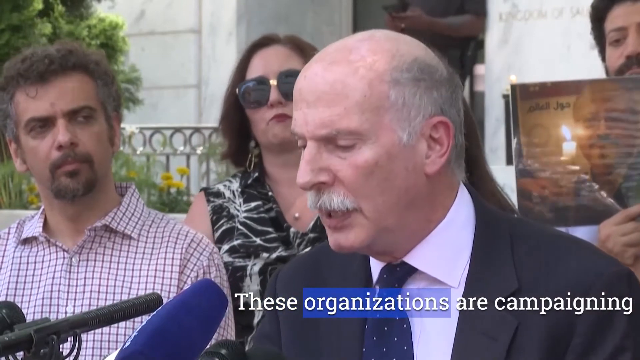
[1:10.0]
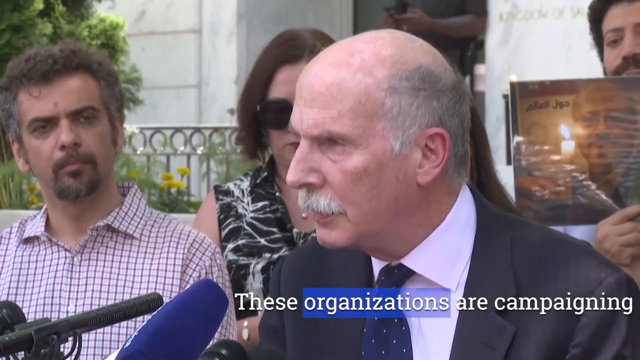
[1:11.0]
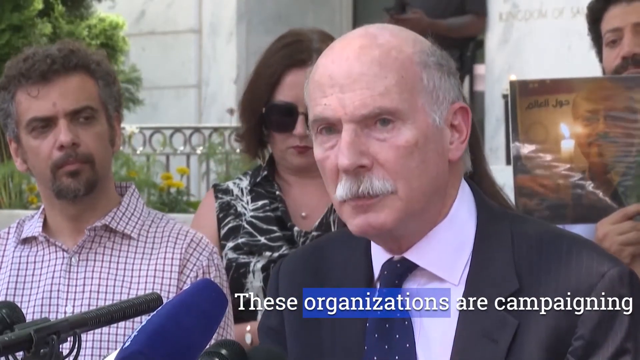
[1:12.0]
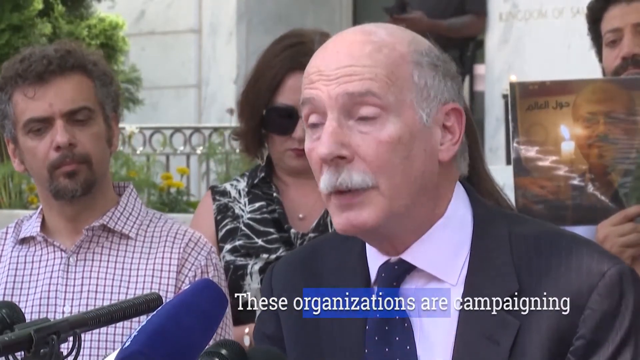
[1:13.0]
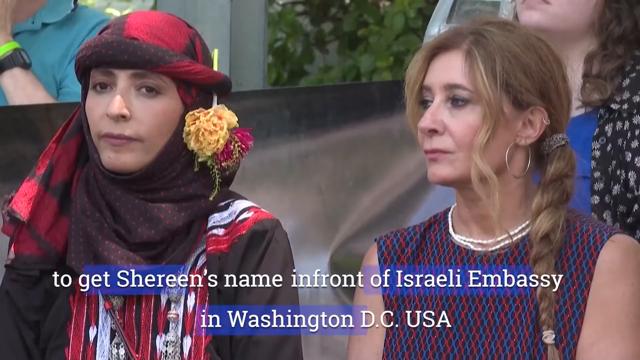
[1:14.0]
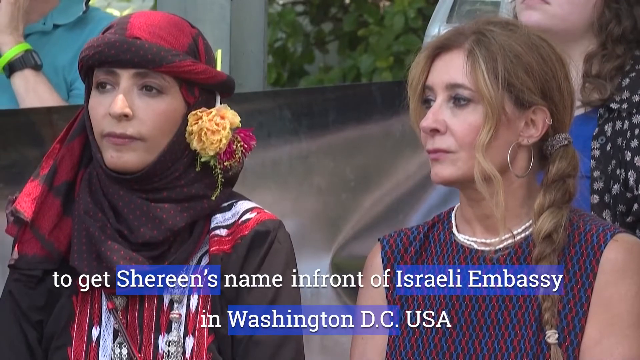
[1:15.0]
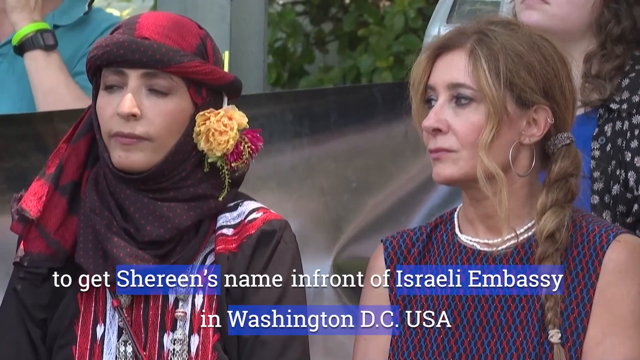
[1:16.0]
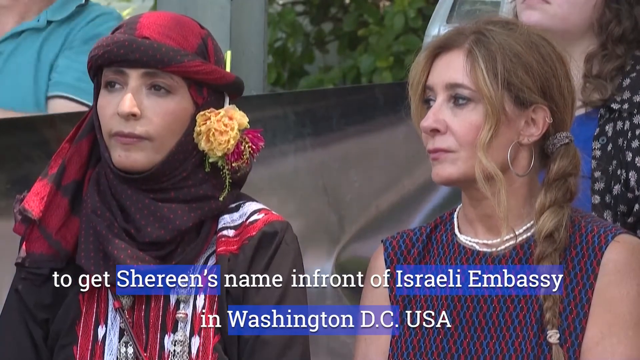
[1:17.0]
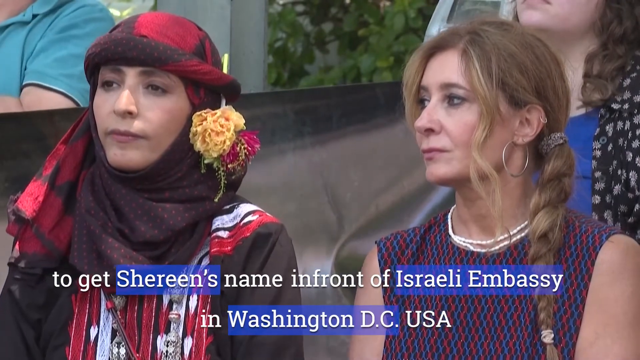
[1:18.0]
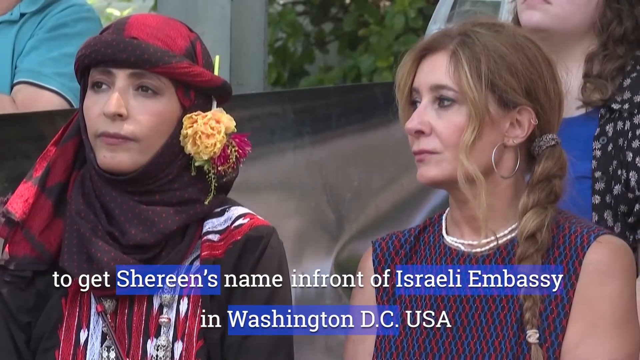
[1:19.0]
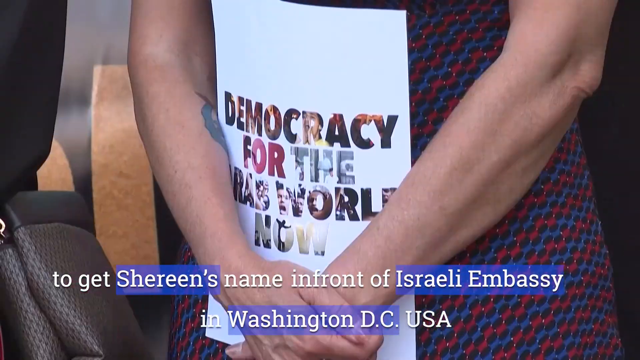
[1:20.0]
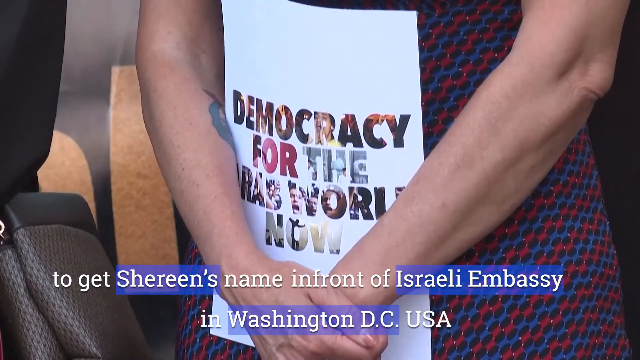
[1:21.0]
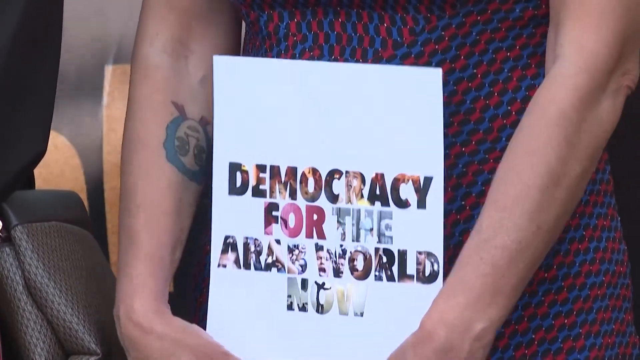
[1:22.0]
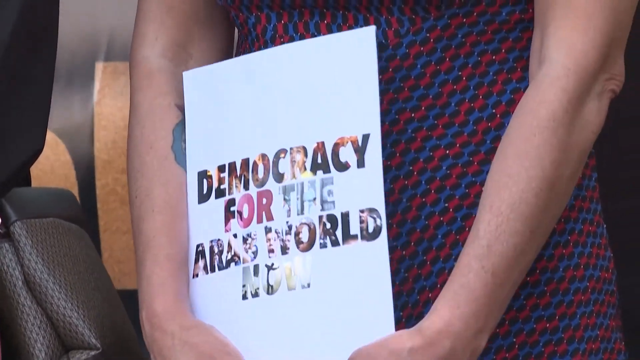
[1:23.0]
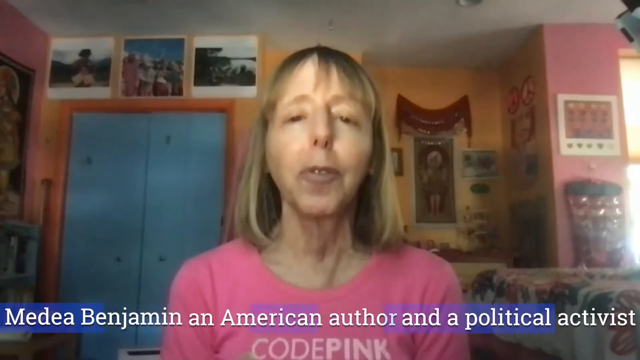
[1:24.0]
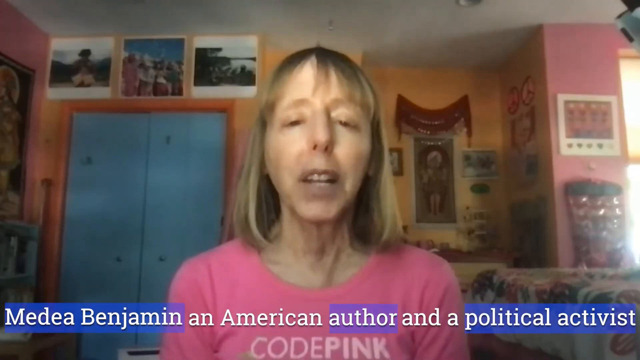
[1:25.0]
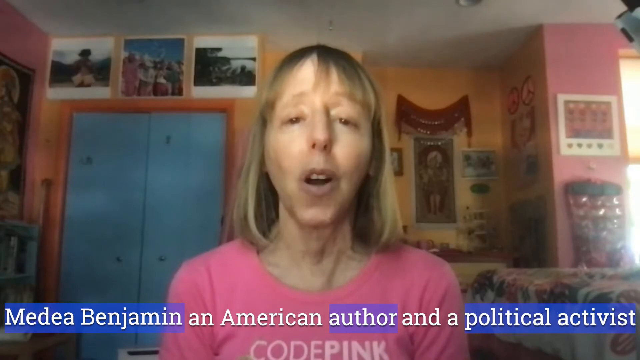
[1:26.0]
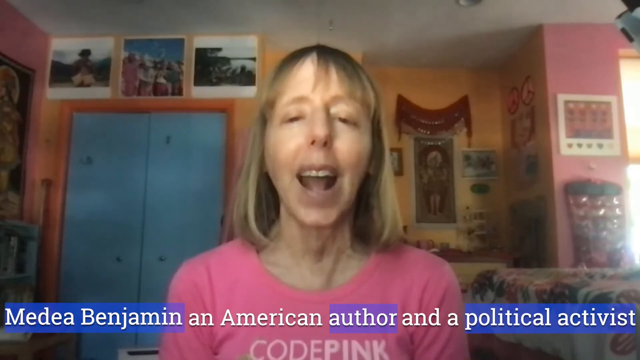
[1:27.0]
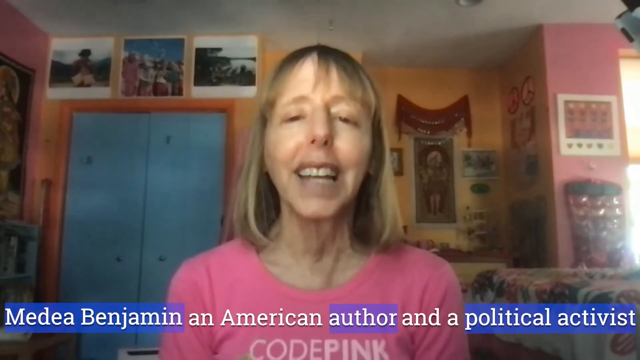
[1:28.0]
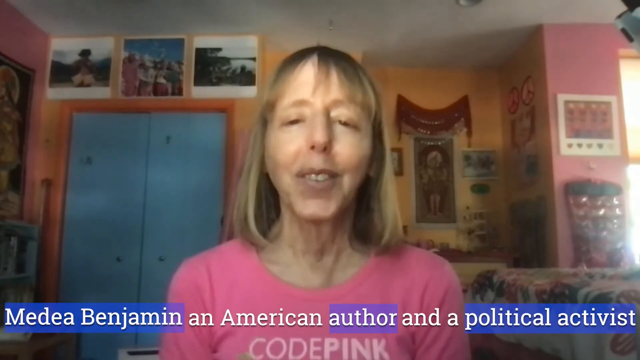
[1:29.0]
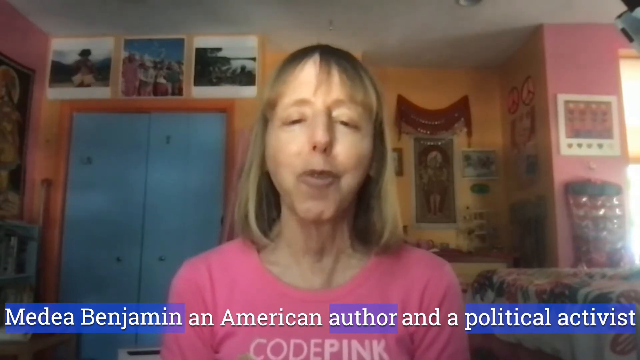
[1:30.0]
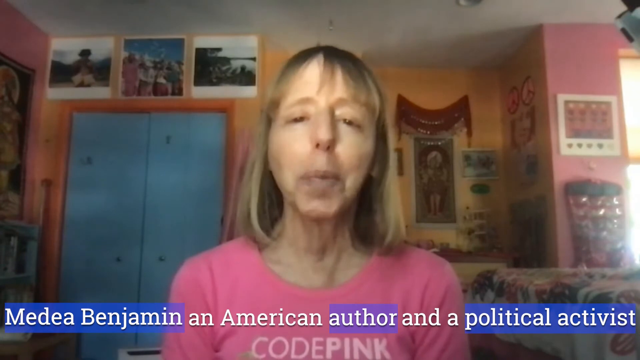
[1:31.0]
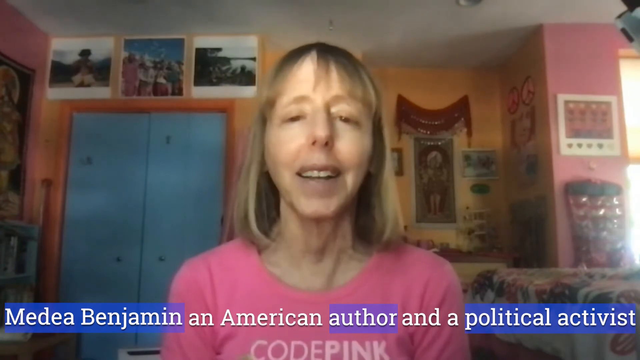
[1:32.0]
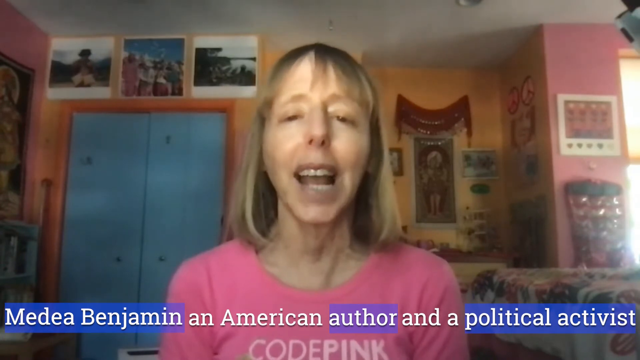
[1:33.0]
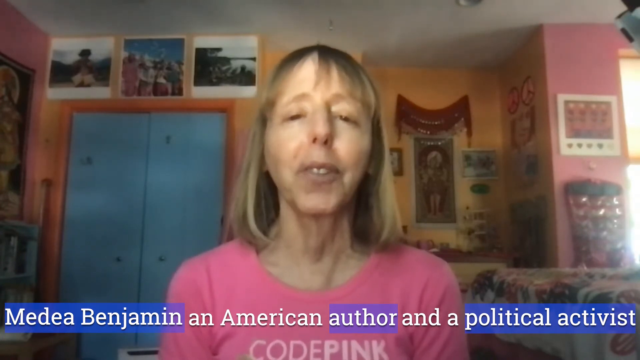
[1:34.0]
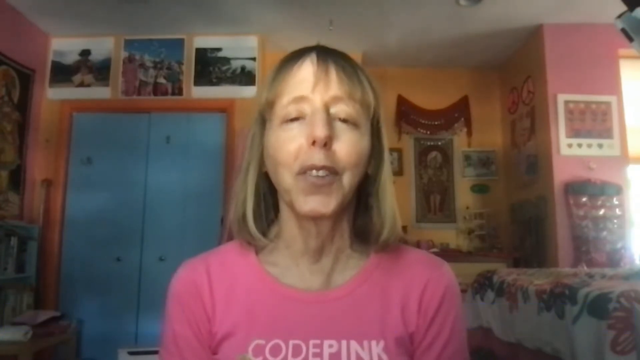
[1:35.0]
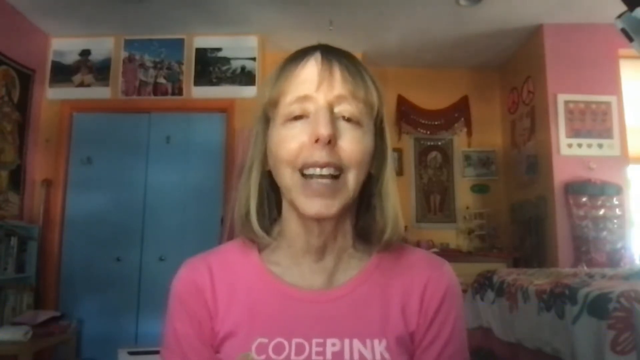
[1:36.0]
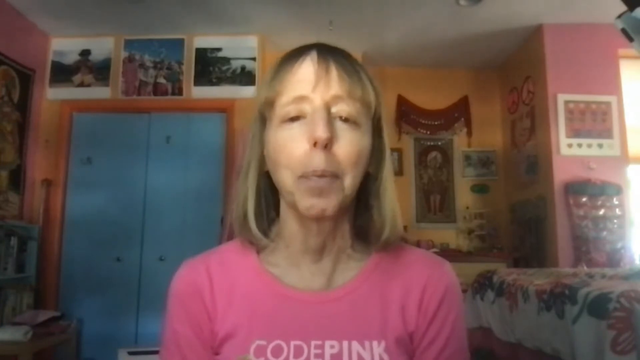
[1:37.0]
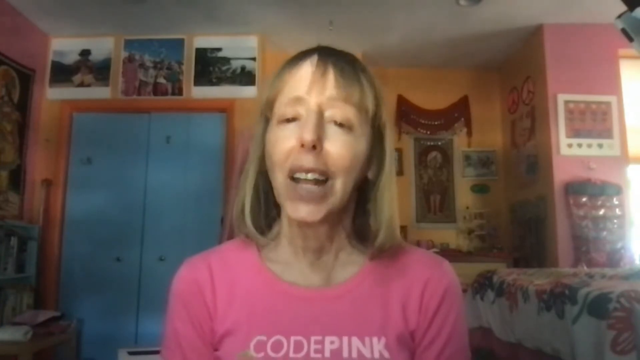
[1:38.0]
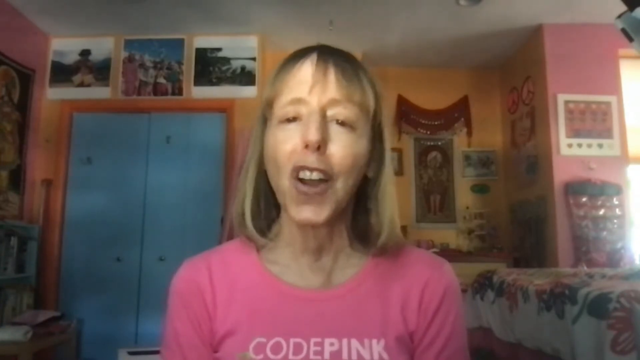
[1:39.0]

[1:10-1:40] A man with a silver mustache, an expensive-looking suit, a navy blue tie with polka dots and a slightly pink shirt stands at a microphone. People behind him hold up signs, one of them the sign of Jamal Khashoggi seen earlier, with the candle overlaid on his face. Text appears explaining that these organizations are campaigning to get Shireen's name in front of the Israeli embassy in Washington, D.C., U.S.A.; Shireen is apparently the woman pictured on the mural. A woman holds a sign on her chest reading "Democracy for the Arab World Now", holding it so the camera can see it. Then an American author and political activist, a woman with short blonde hair, speaks into the camera in an interview.